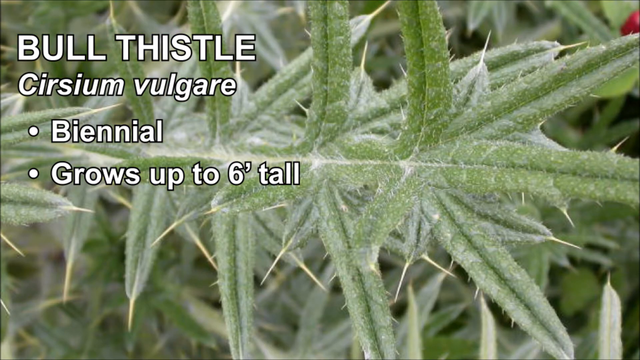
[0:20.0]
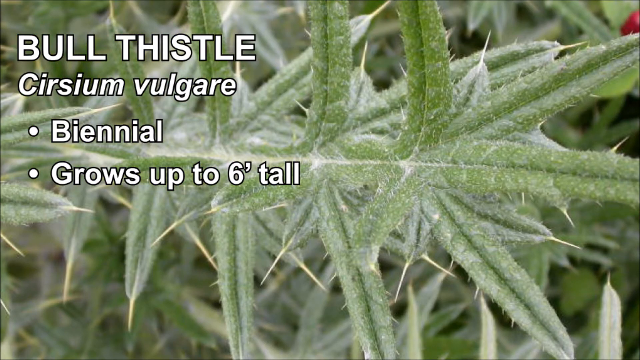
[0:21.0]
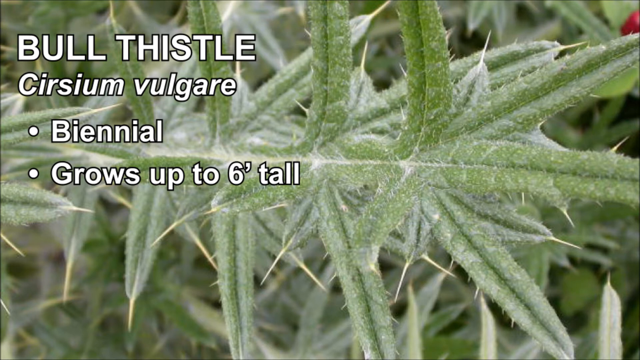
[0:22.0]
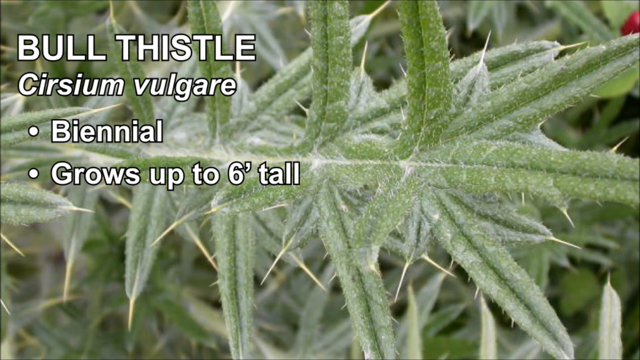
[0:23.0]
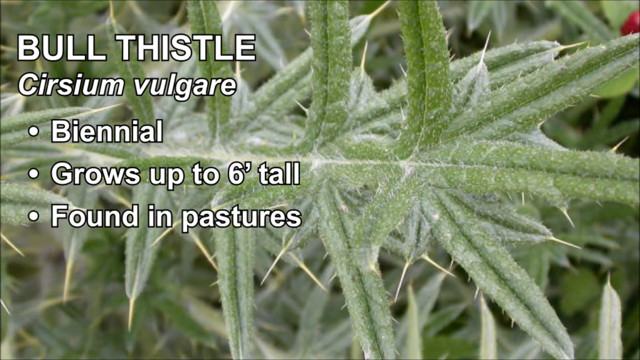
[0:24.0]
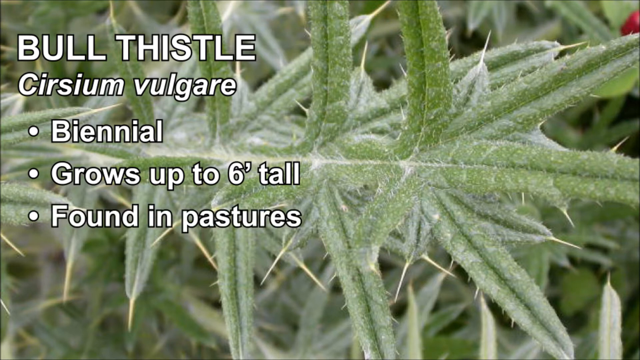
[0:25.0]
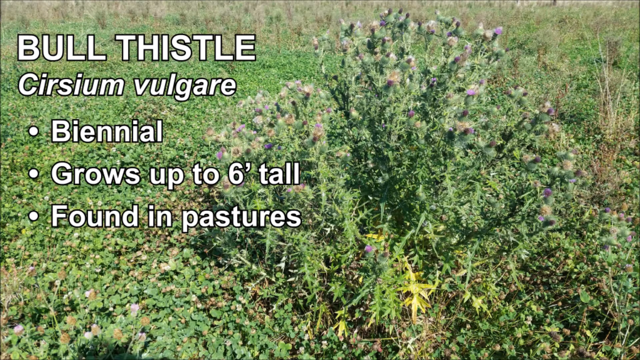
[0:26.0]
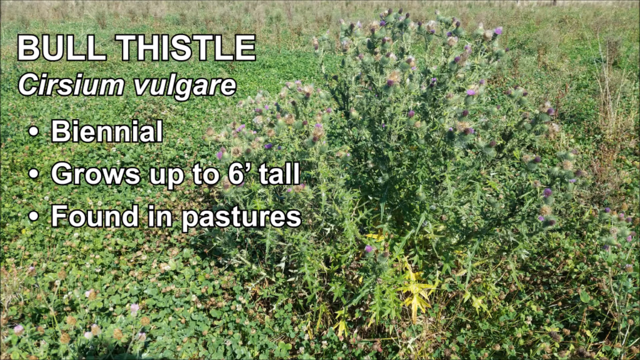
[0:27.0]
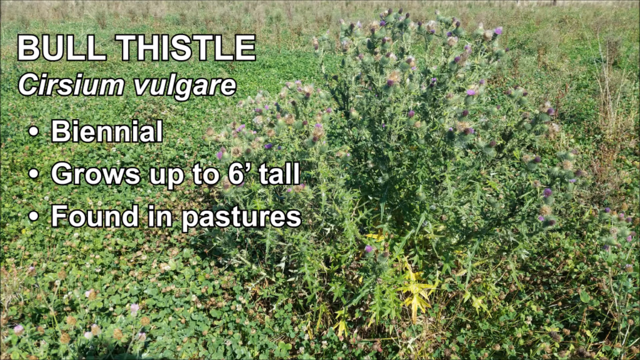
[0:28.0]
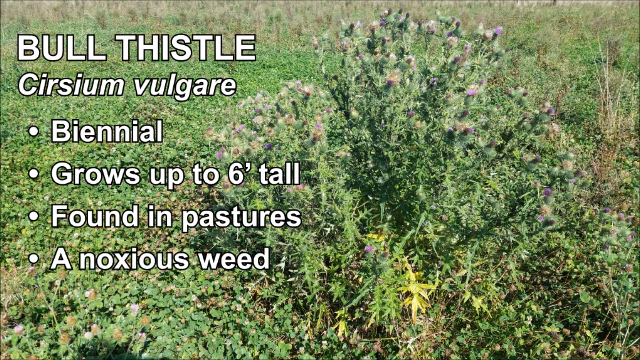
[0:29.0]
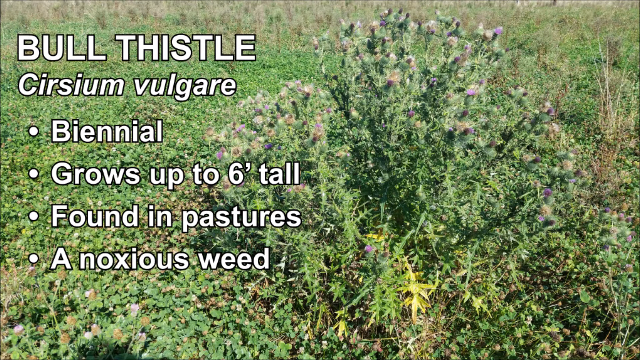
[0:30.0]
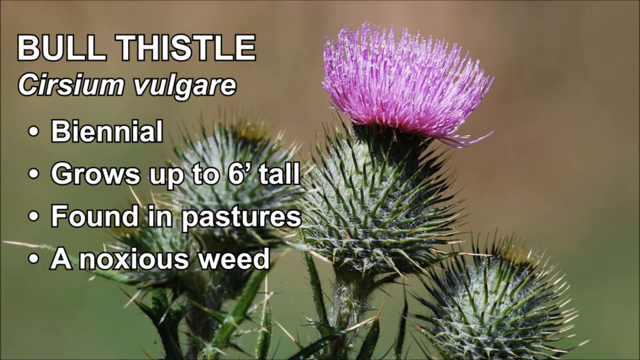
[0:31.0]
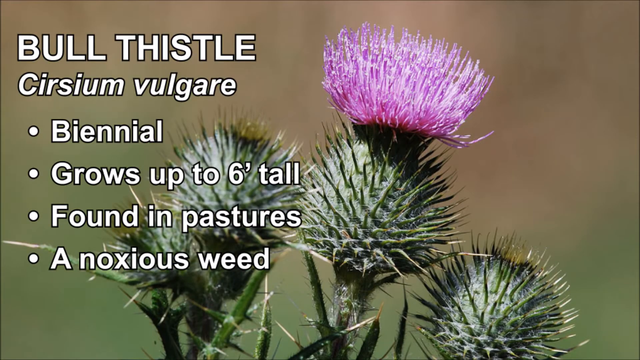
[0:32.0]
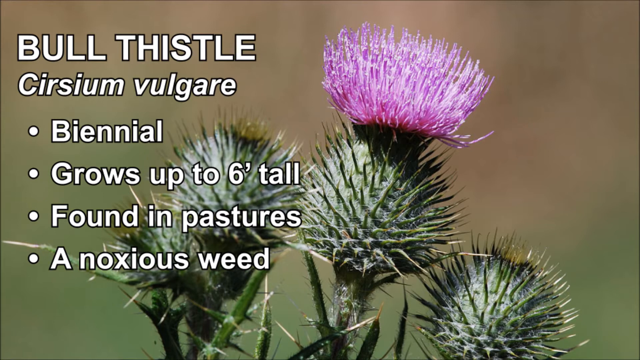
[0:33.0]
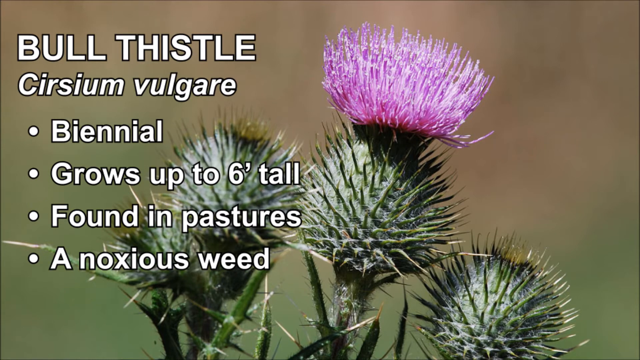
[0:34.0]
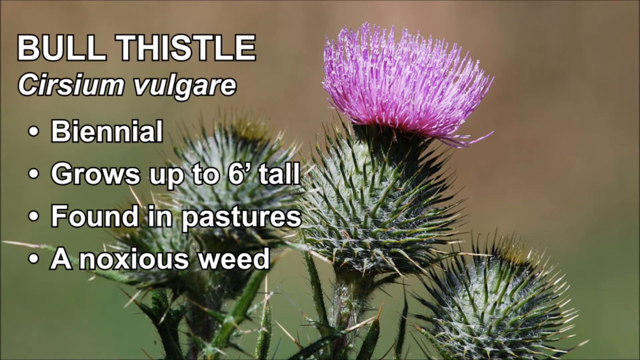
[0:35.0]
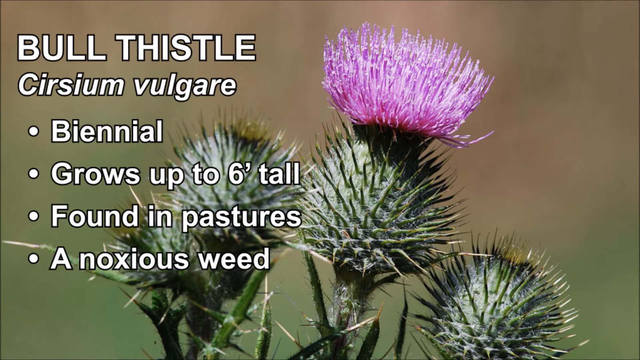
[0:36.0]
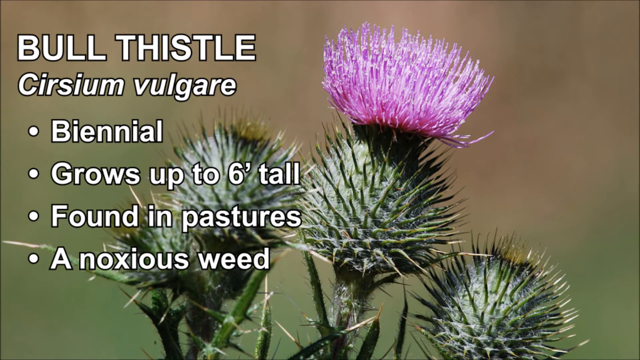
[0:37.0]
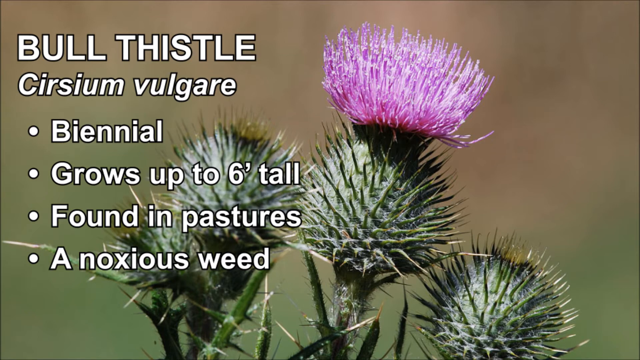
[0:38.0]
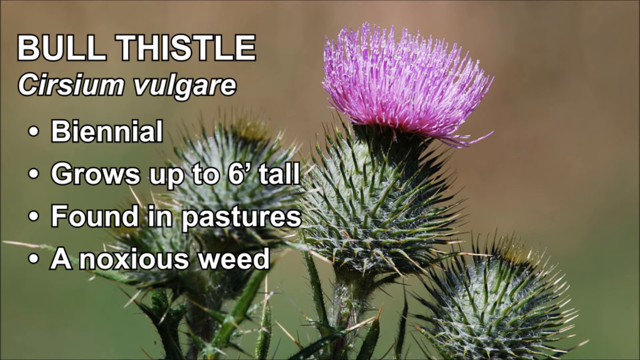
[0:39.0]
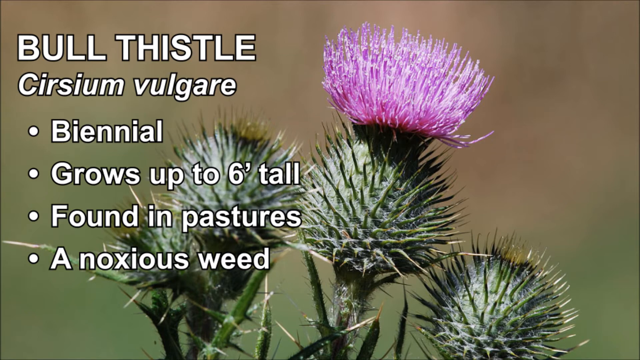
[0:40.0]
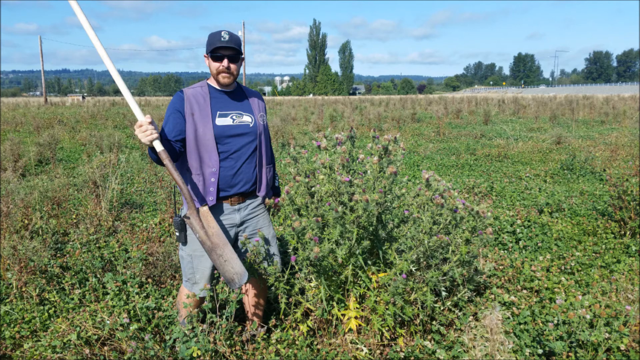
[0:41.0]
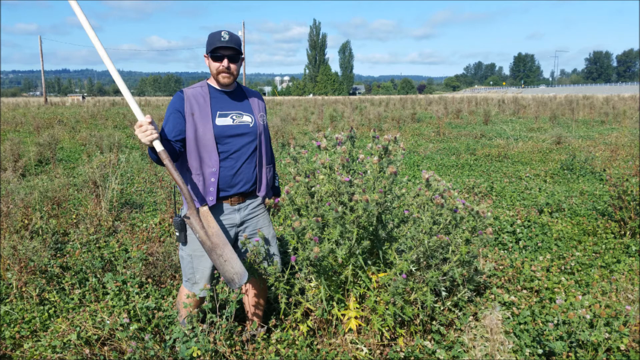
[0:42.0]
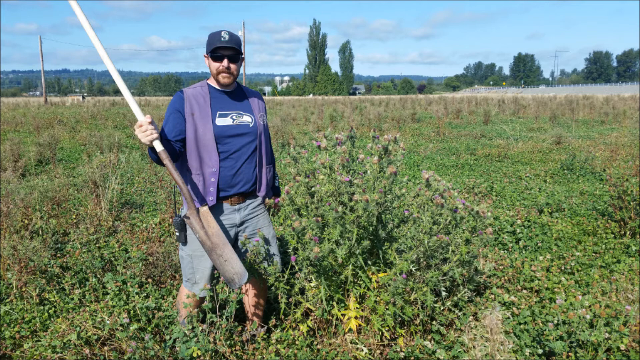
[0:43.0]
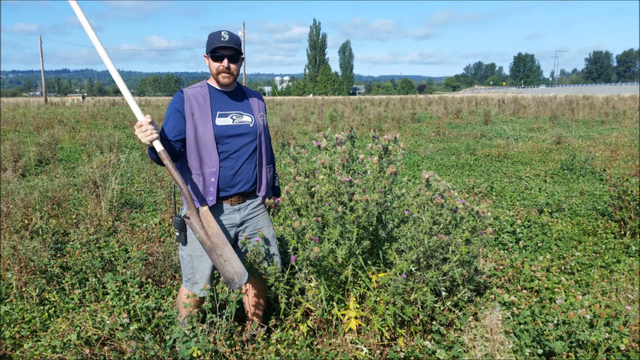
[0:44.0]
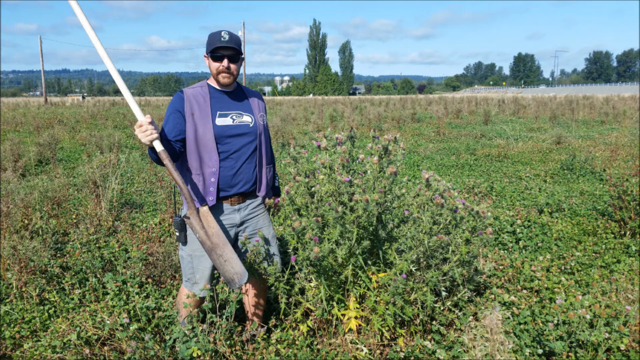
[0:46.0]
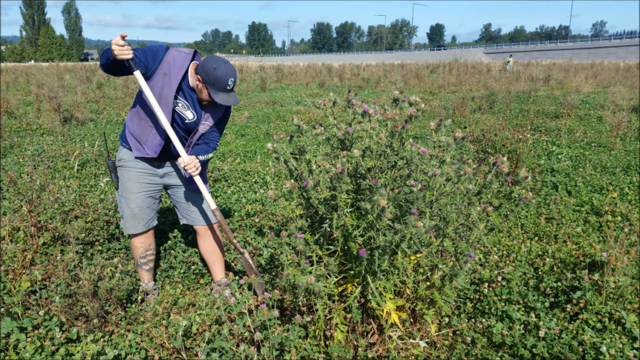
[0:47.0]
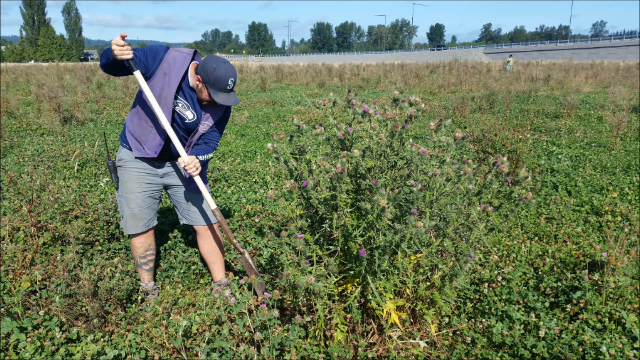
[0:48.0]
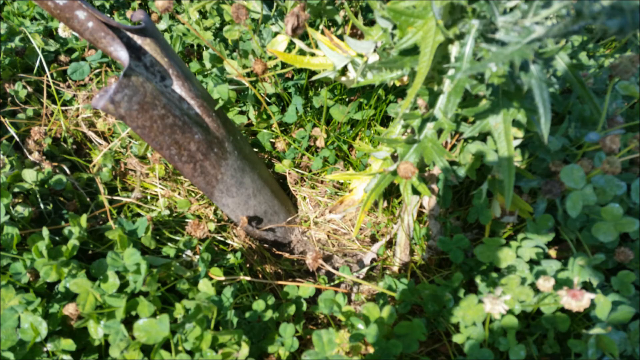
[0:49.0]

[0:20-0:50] The spiny plant with purple flowers is identified as Bultistel, Latin name Circium vulgaris, a biennial plant that grows up to 6 inches tall, is found in pastures and is a noxious weed. A man appears holding a stick. He seems tall, but the plant is also tall, reaching almost to his chest. He has a brown beard and a mustache and wears a dark blue hat with an S, dark glasses, a dark blue long-sleeve t-shirt with a purple vest on top, gray pants and a brown belt, with a walkie-talkie in his right pocket. He has a shovel pointed at the plant, apparently about to use it to pick up the plant.